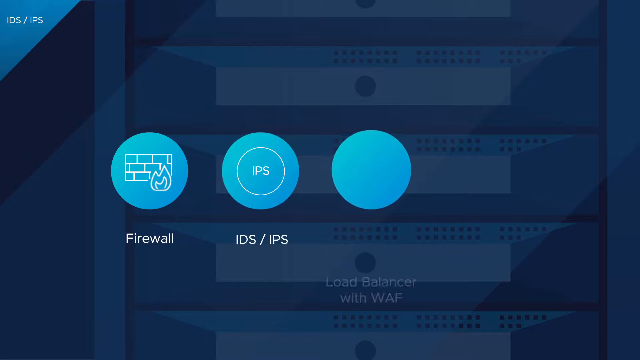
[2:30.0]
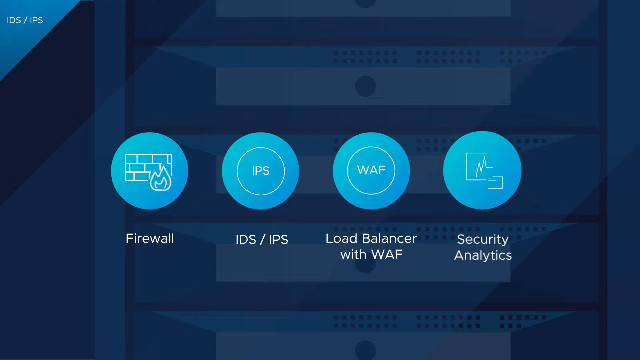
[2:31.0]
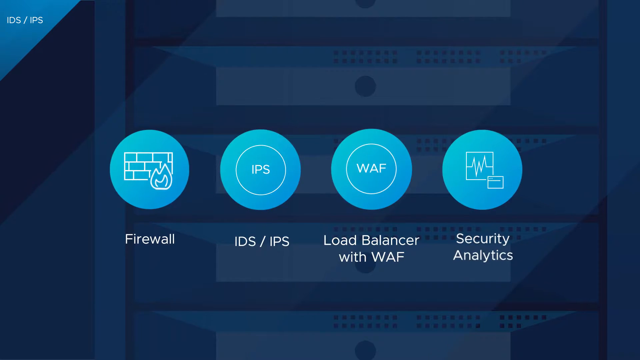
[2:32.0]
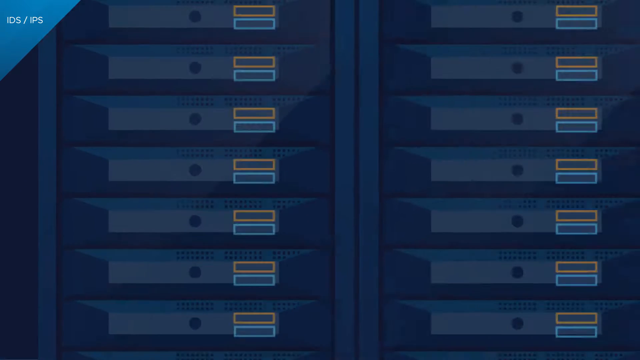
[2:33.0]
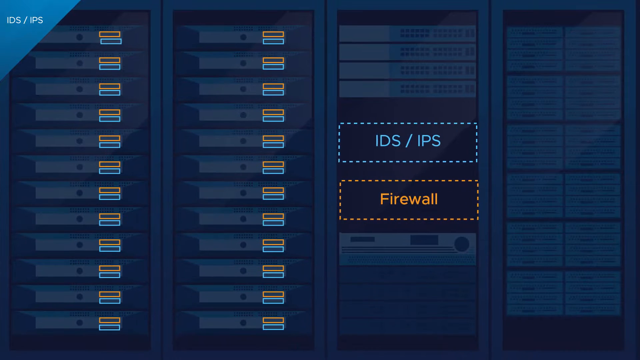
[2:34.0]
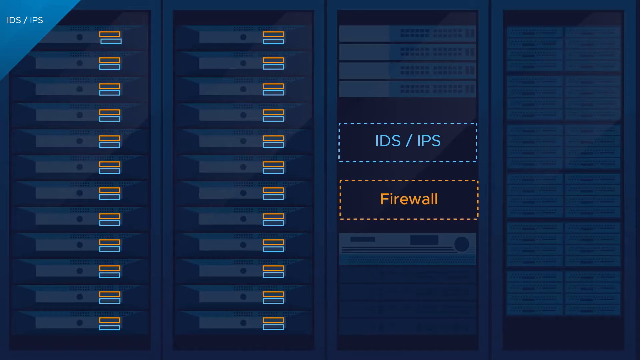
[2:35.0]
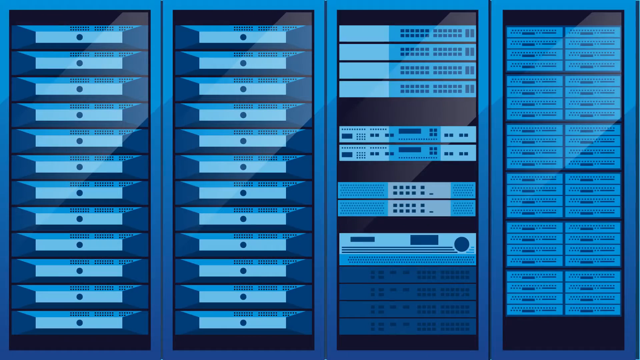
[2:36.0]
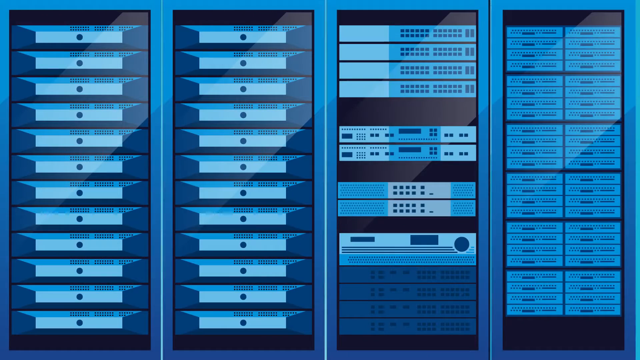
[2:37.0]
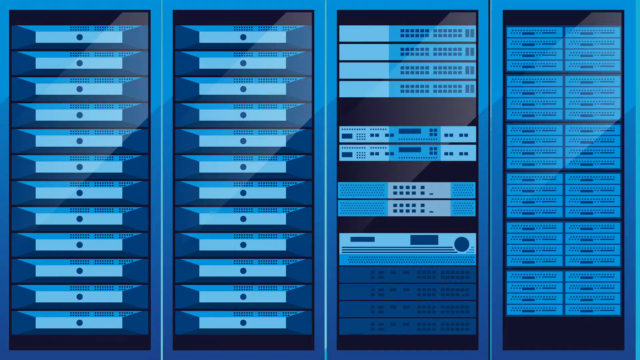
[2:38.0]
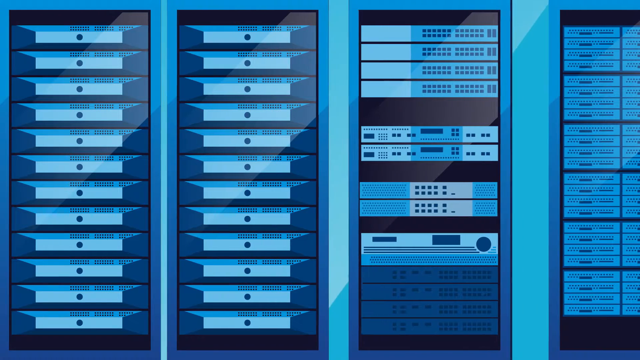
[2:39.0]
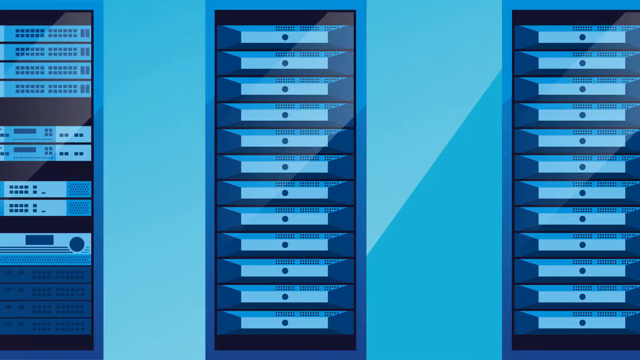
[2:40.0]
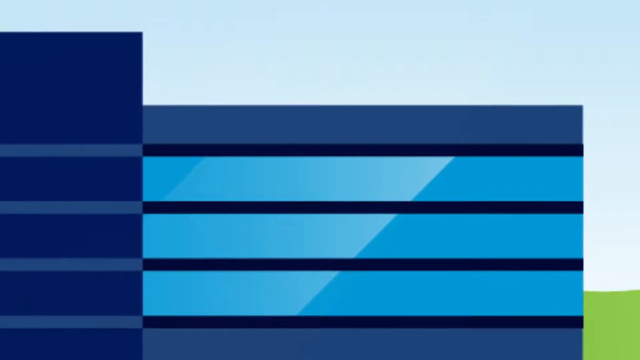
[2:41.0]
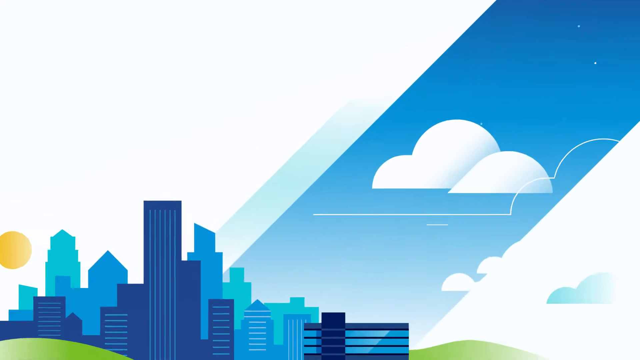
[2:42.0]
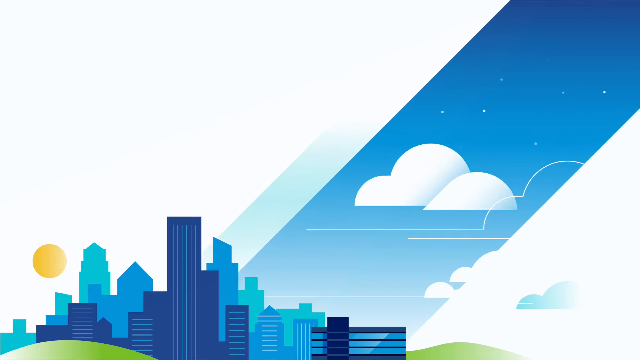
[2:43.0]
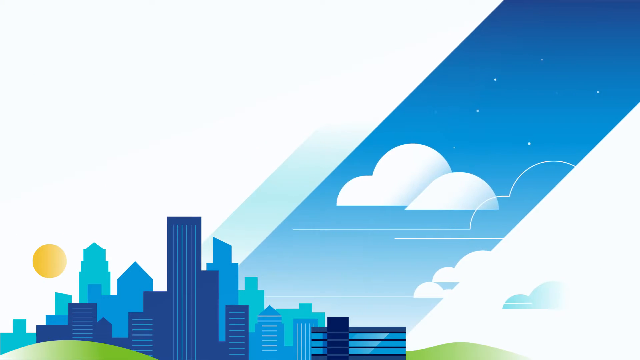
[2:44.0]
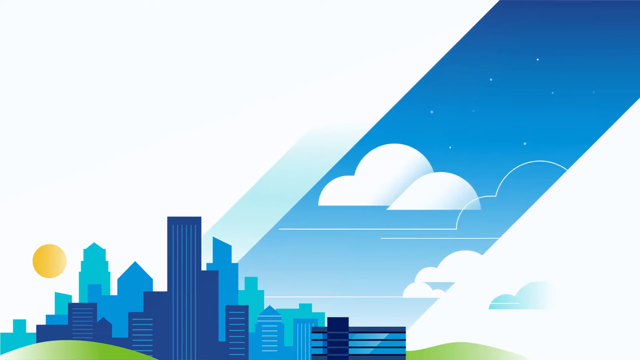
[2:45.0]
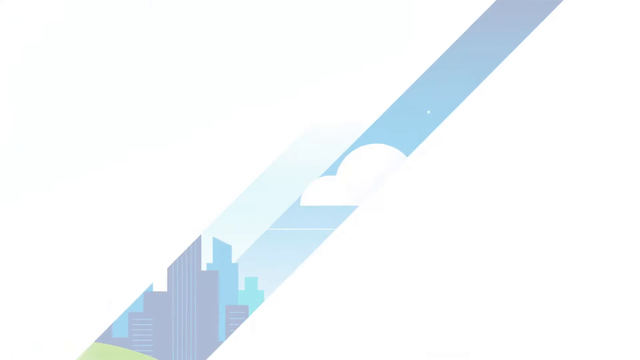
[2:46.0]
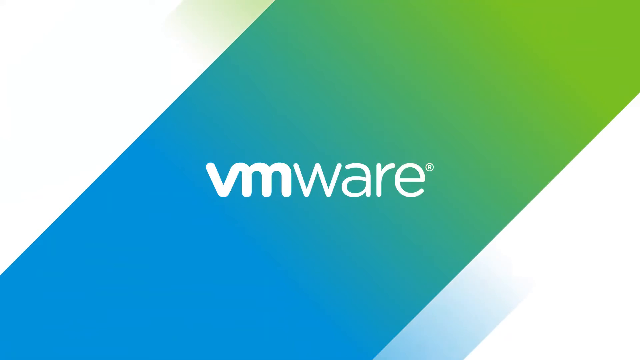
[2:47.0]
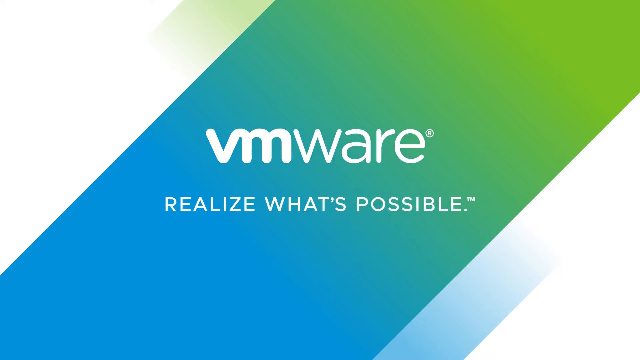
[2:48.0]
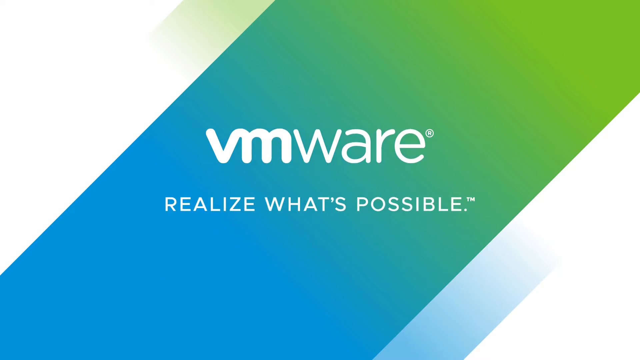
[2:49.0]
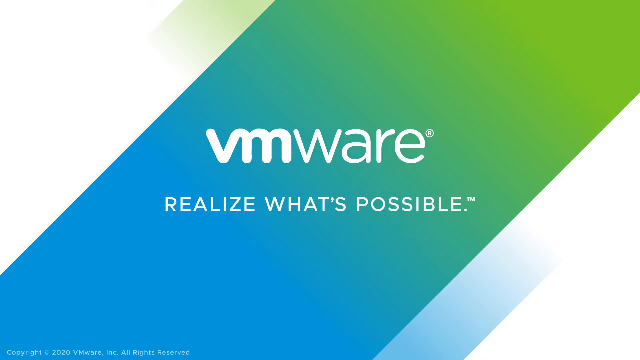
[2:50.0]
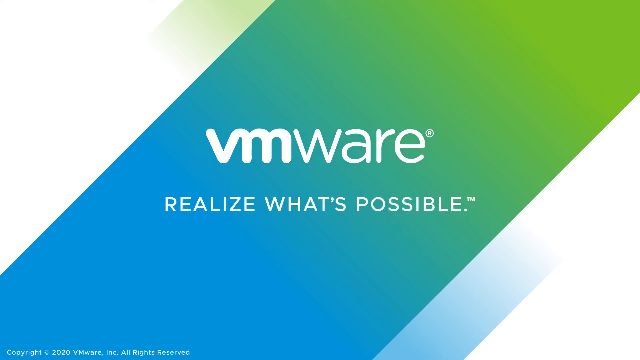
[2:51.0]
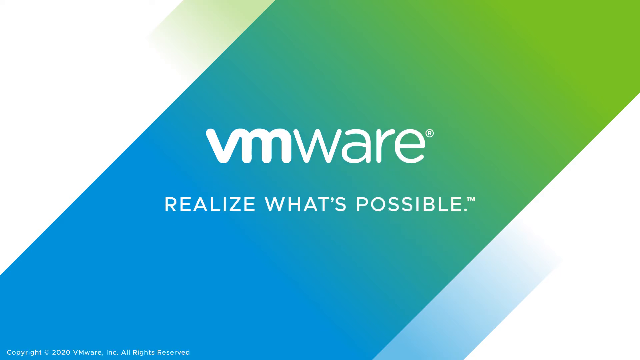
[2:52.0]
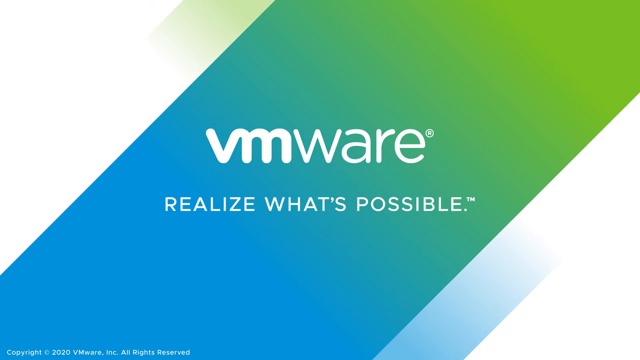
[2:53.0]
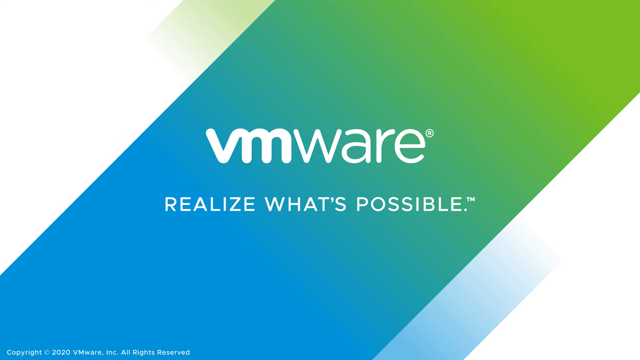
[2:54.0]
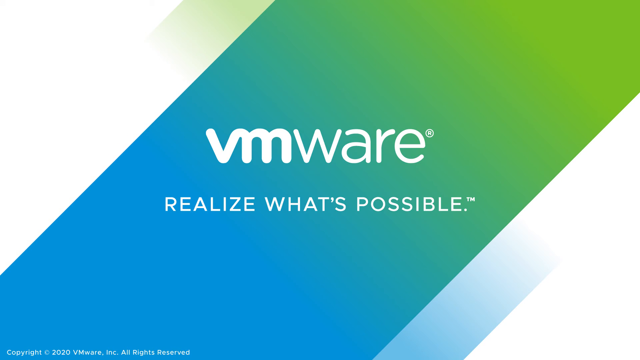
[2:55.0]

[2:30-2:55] The new server racks with blue and orange rectangles are on the left, and "IDS ISP" appears in the top left. Cutout boxes, including the firewall box, are on the right side, and the image holds for a few seconds. The display then shifts to shades of blue where everything seems put back together. The server racks move from the left to the right side and go off the screen. The view pulls out of the building back to the blue city landscape and sky. The logo from the beginning pops back up: white in the upper left and bottom right, tan in the center, blue in the bottom left and green in the top right, with "VMWare" in the center. Text pops up underneath reading "realize what's possible" in all capital letters, followed by a trademark symbol. The image holds on this for about five or six seconds.